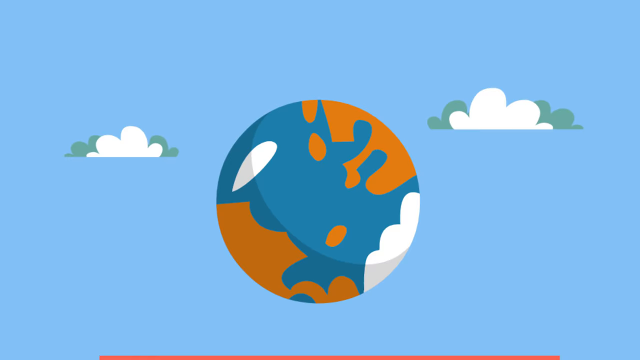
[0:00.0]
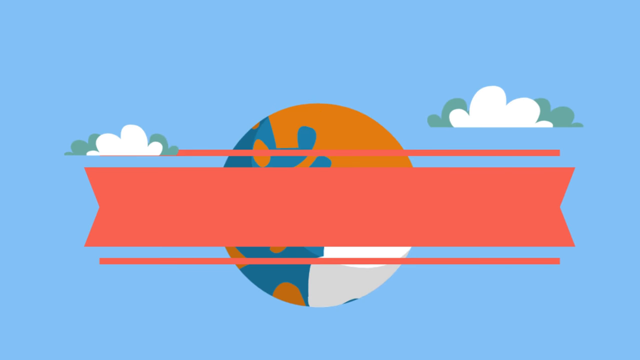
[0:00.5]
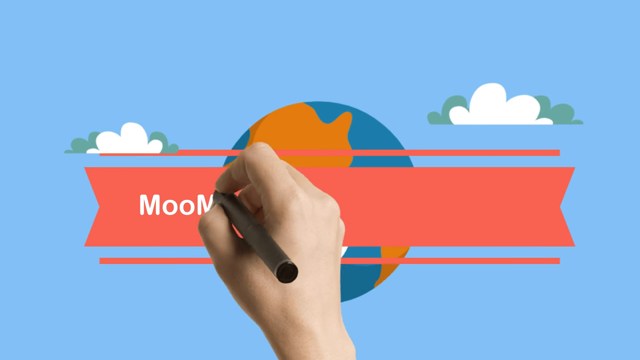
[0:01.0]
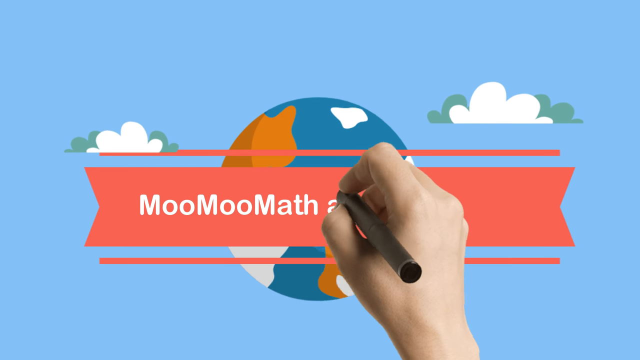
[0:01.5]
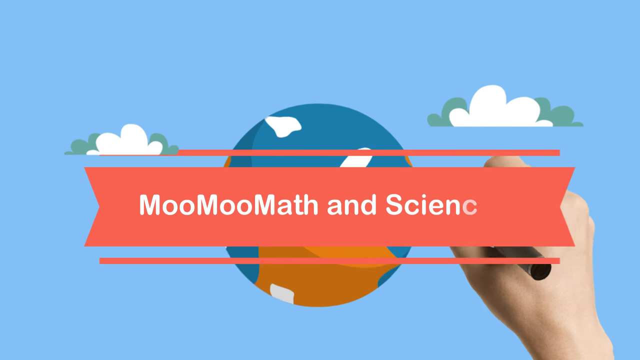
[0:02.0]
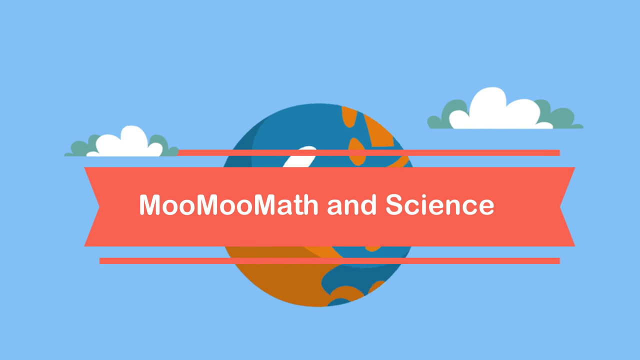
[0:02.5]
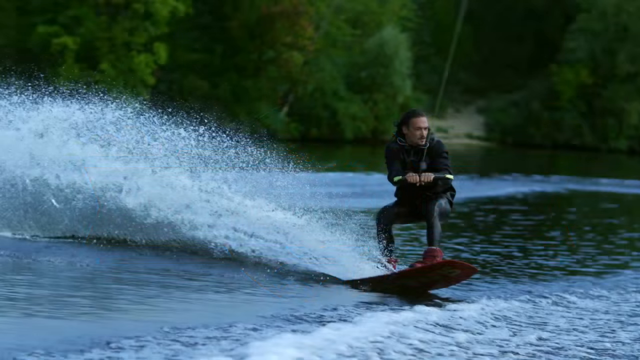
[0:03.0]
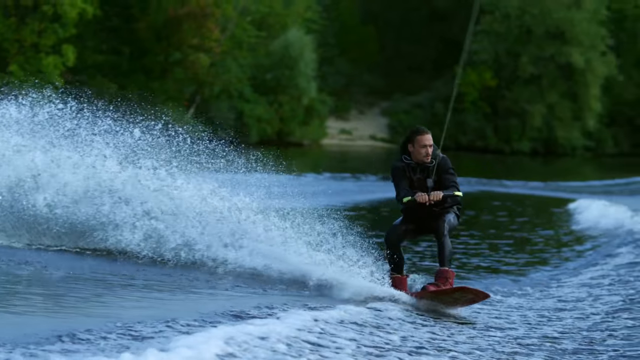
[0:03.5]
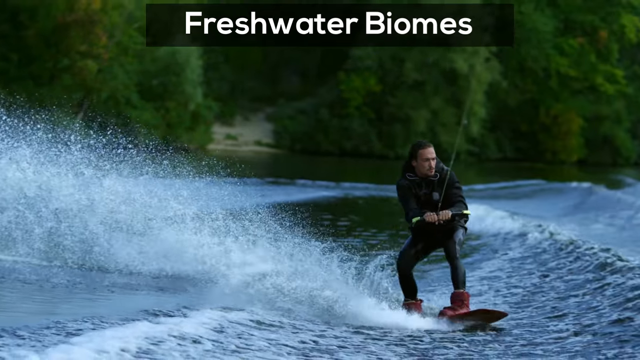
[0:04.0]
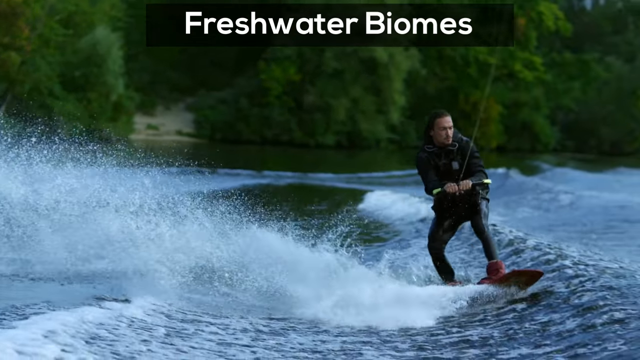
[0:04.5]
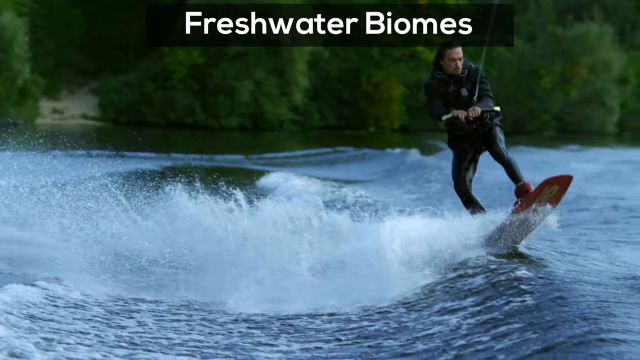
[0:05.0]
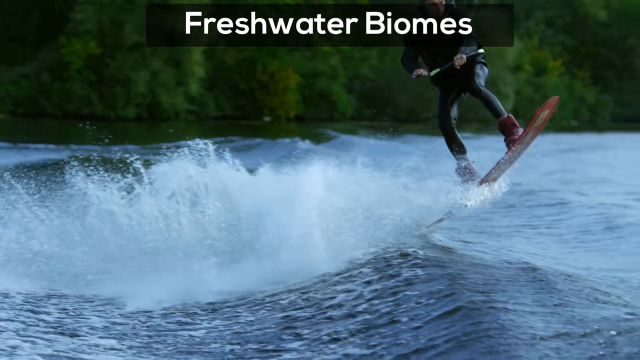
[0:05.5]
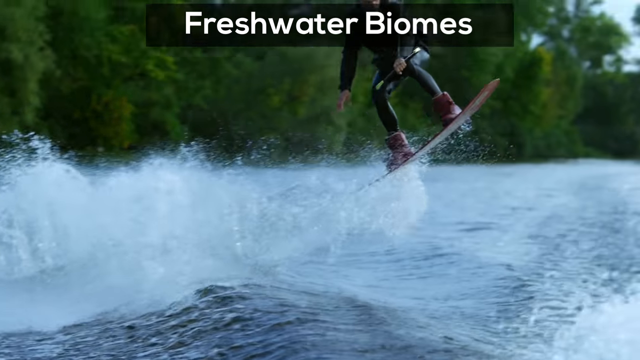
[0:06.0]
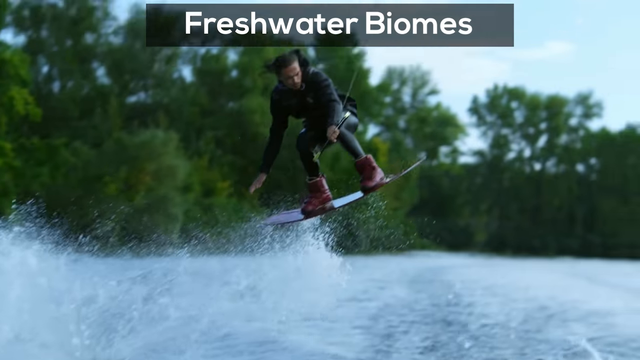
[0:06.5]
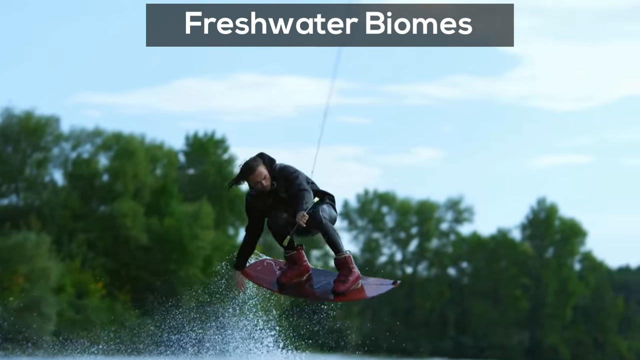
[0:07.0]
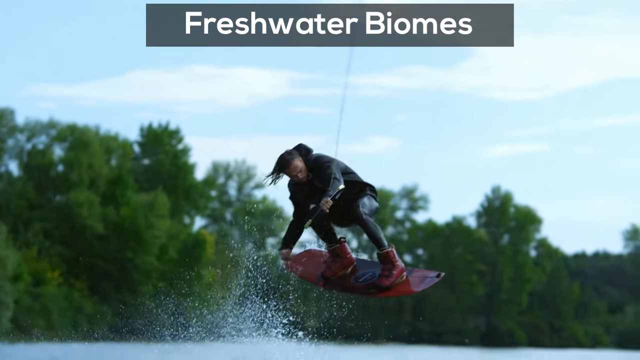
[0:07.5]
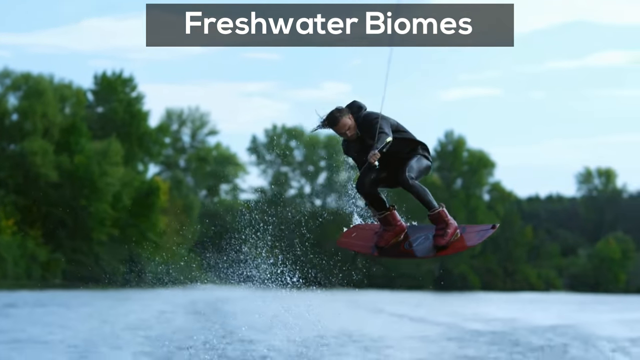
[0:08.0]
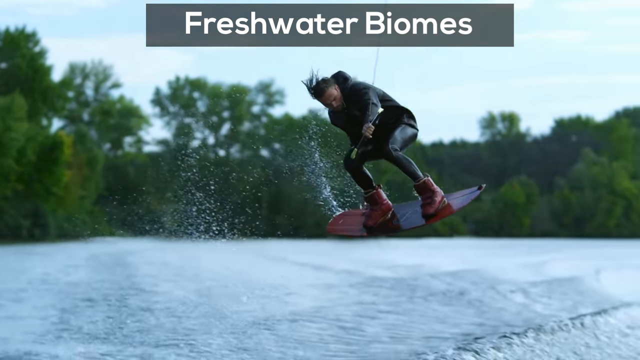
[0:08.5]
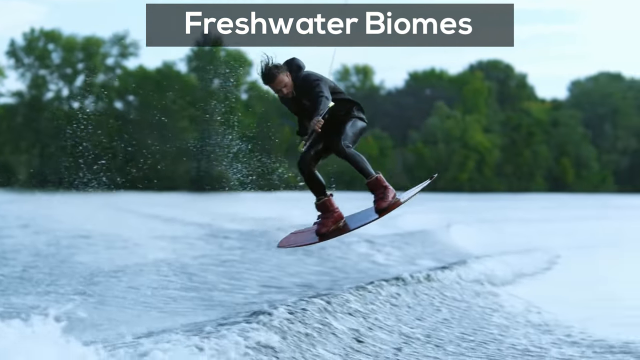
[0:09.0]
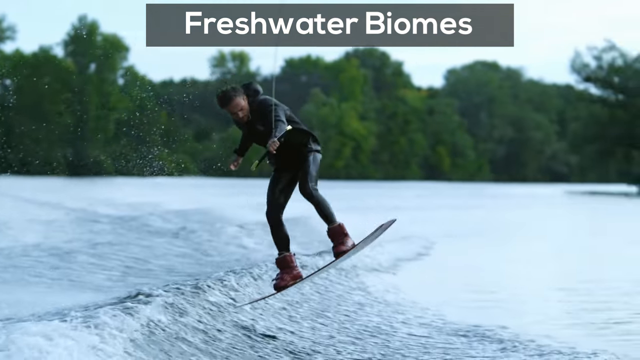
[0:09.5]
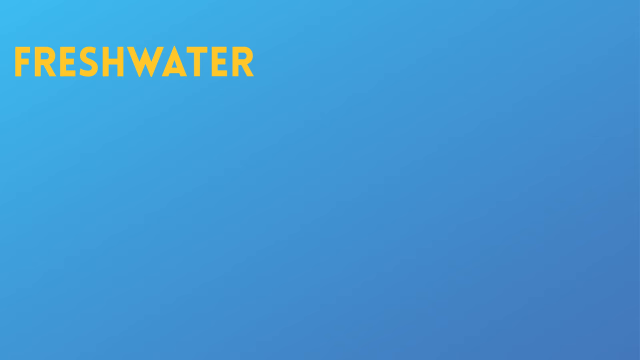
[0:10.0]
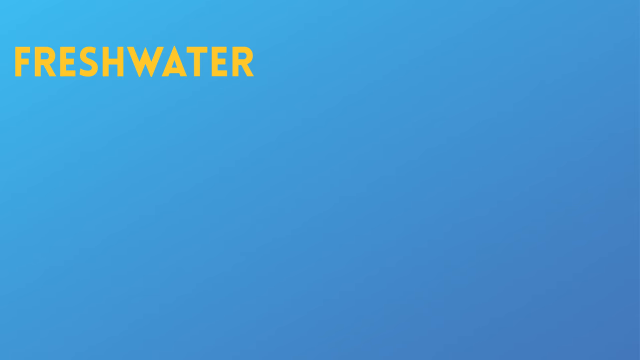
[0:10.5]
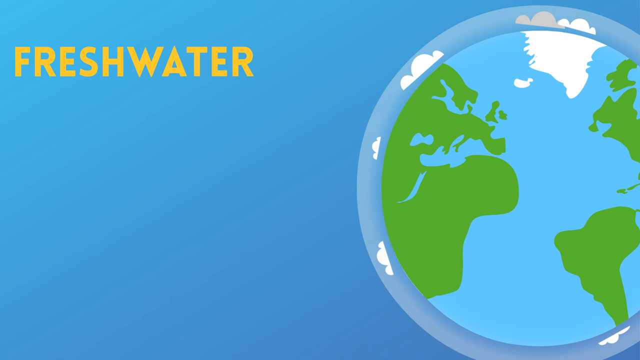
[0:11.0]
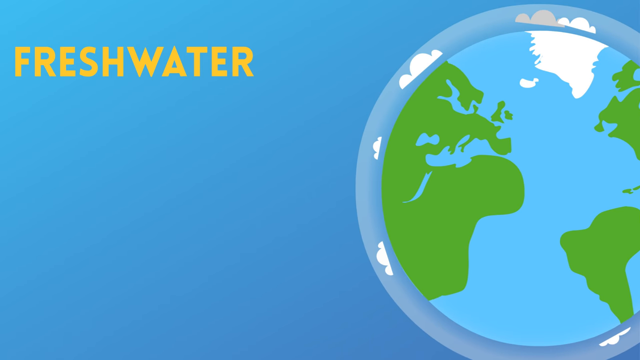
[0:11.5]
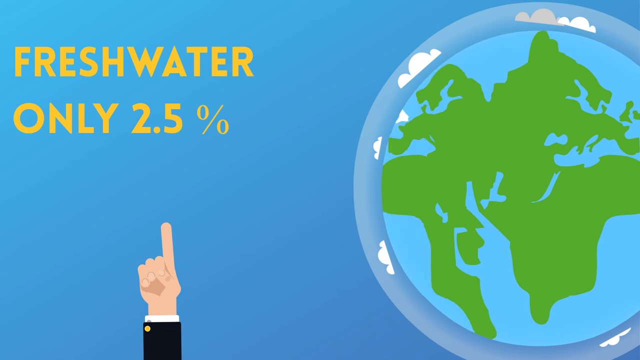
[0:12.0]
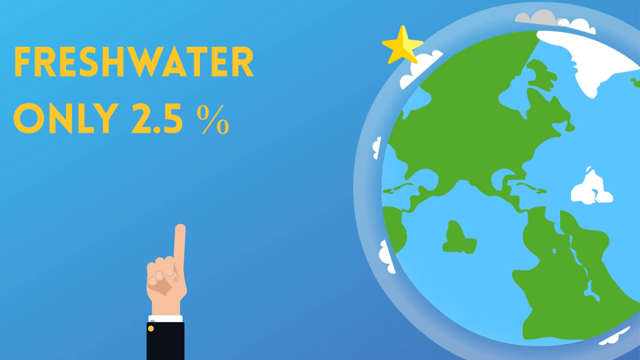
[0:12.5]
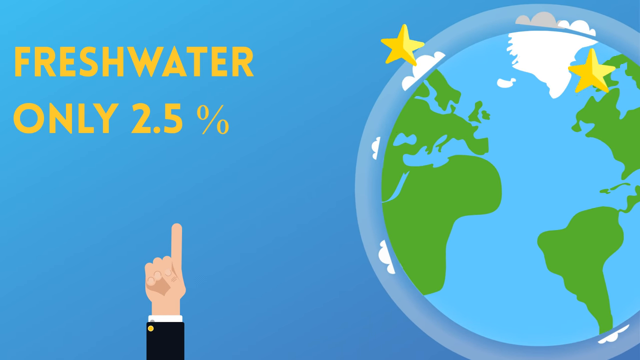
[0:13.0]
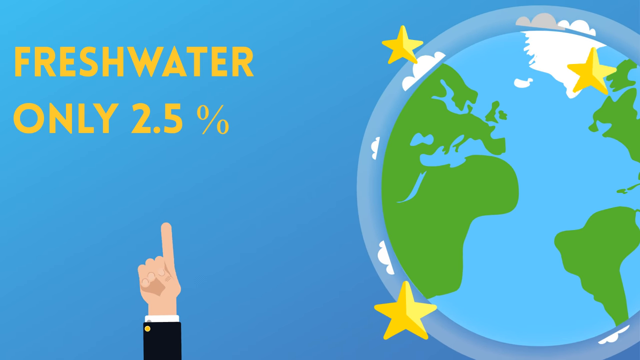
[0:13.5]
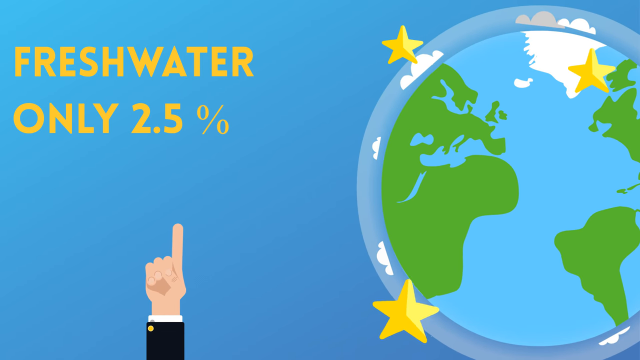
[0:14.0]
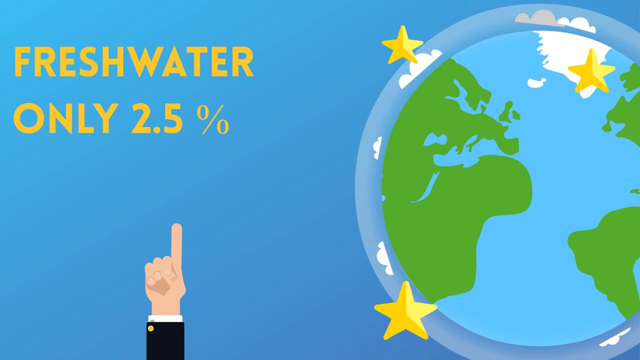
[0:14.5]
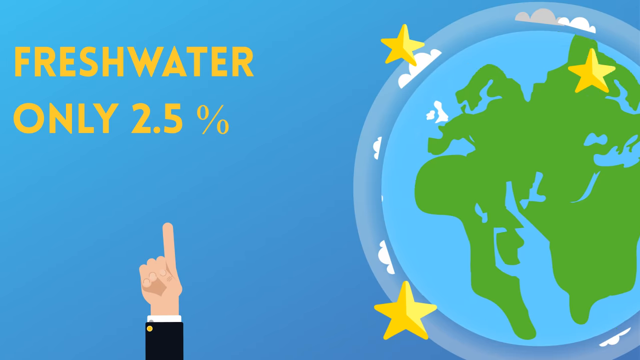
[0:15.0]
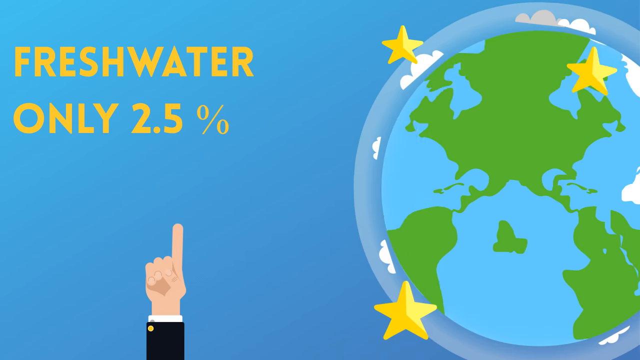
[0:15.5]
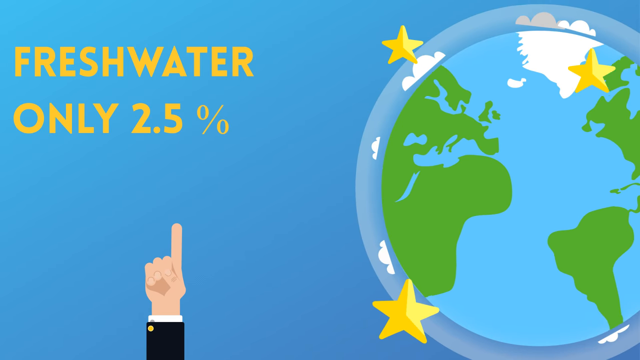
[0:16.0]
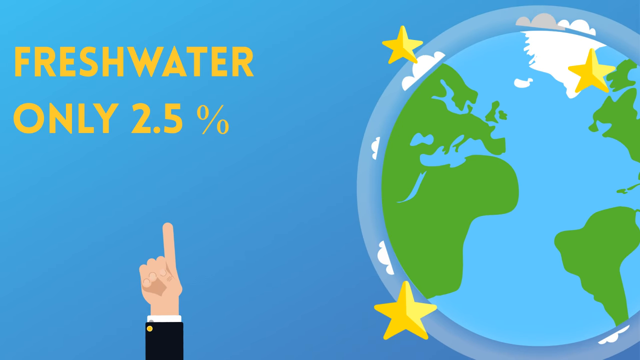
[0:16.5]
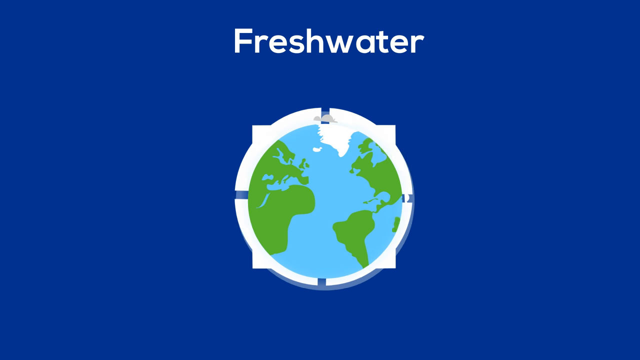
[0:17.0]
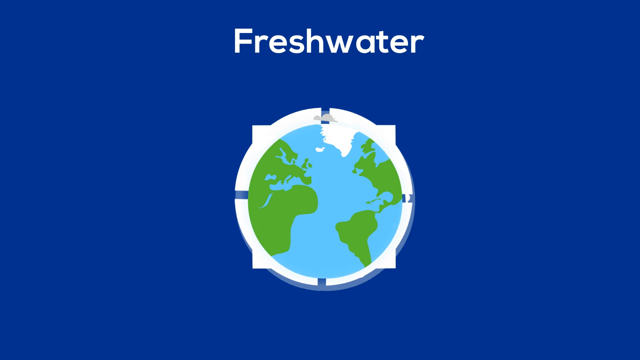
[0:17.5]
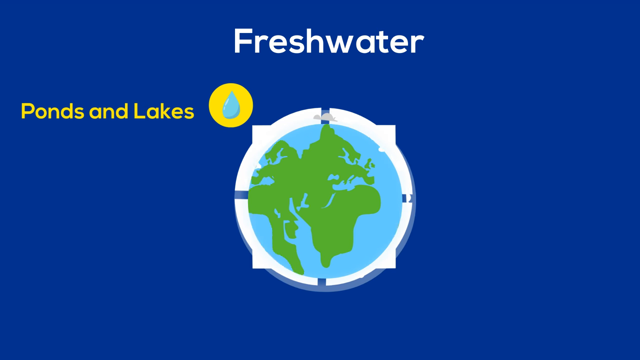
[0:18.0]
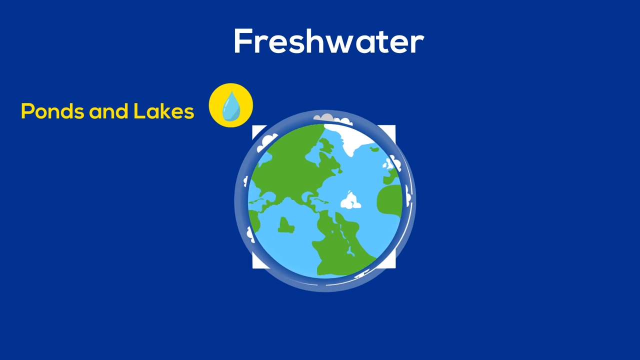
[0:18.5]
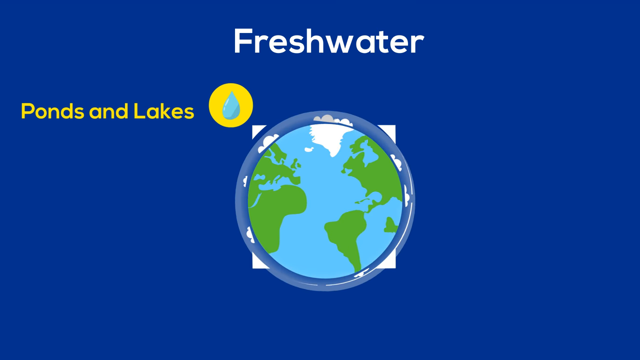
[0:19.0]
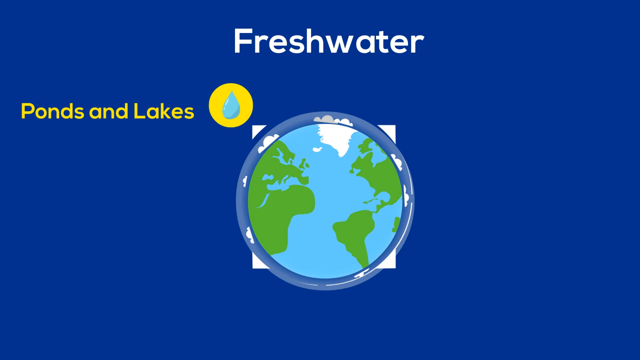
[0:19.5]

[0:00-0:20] A man in a wetsuit water-skis on a freshwater lake and takes a big jump into the air, a large spray behind him. He holds the rope with one hand. He rides a single board, not skis, kind of a rust color. The water looks very cold, and it looks like a cloudy day. The video is brought to you by MooMooMath Science, which produces it.